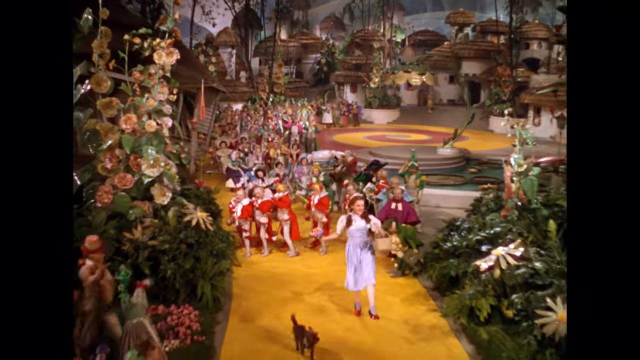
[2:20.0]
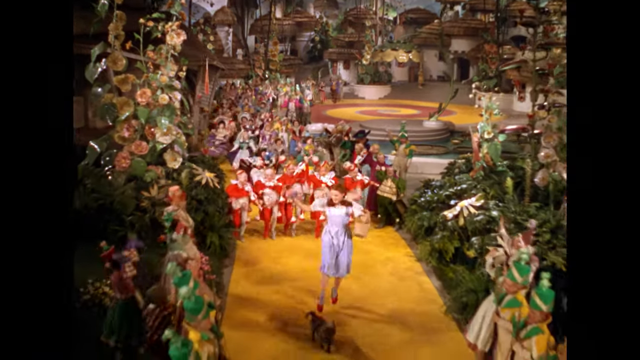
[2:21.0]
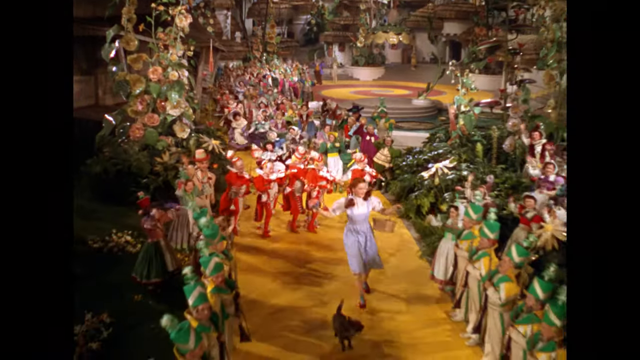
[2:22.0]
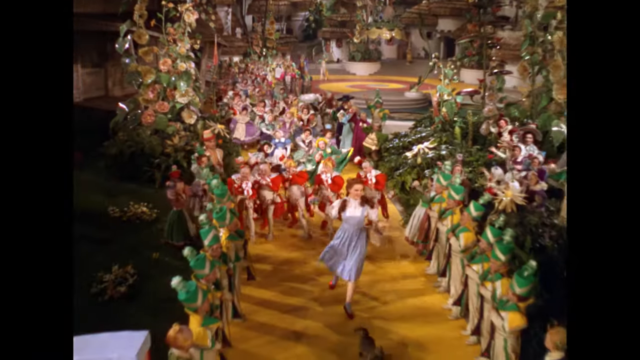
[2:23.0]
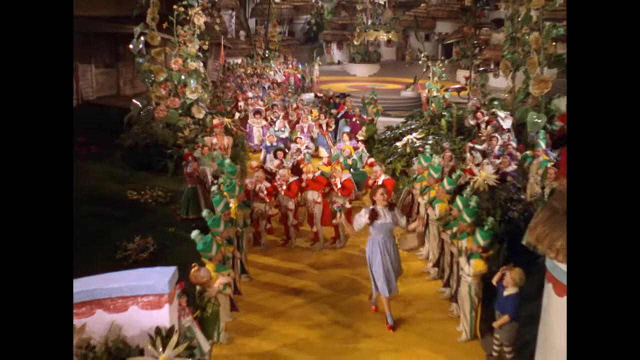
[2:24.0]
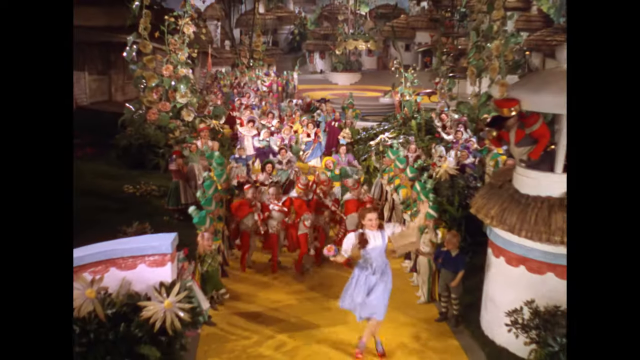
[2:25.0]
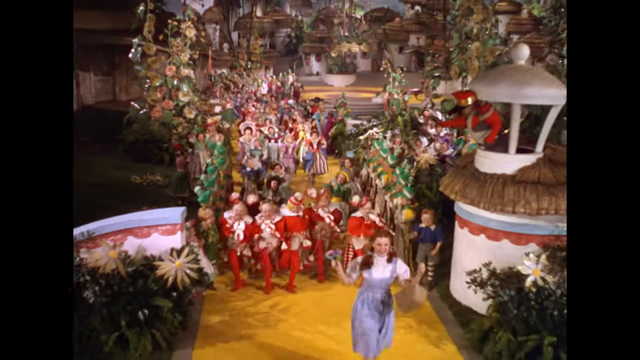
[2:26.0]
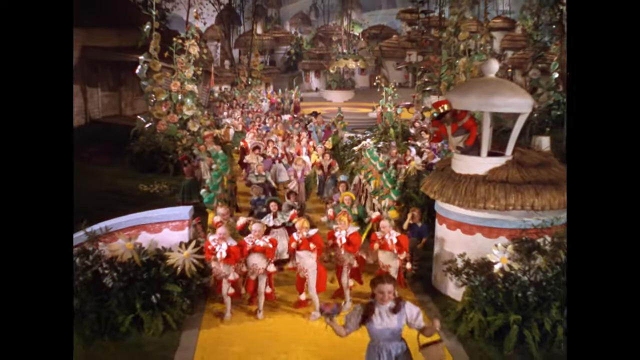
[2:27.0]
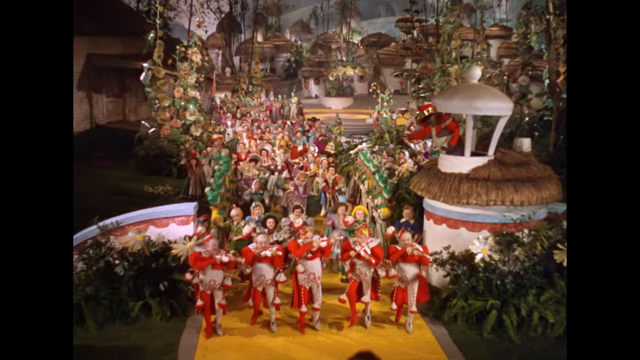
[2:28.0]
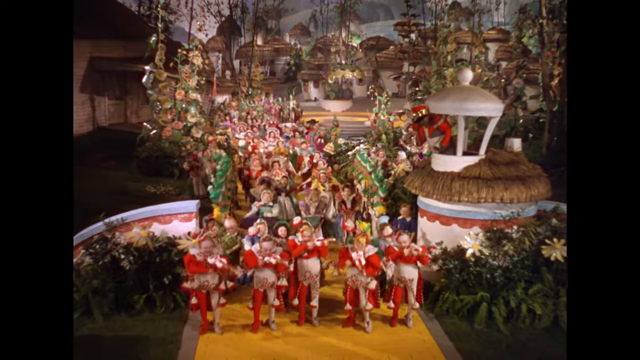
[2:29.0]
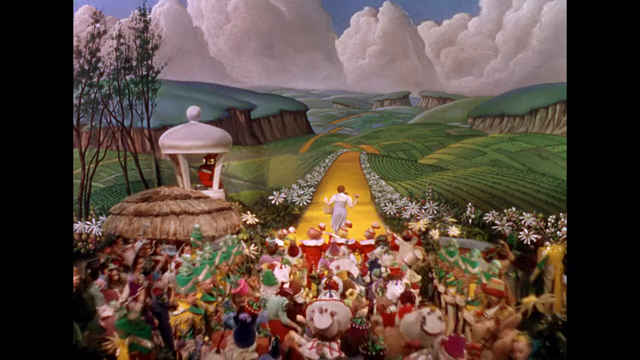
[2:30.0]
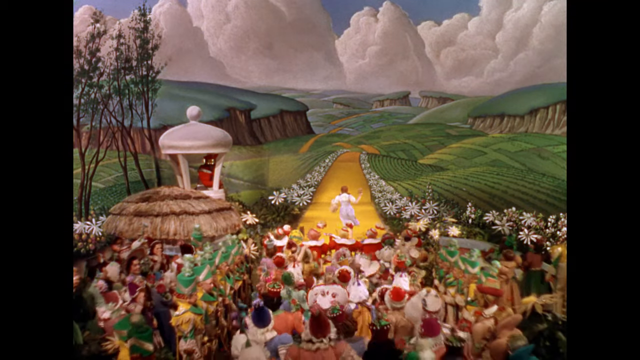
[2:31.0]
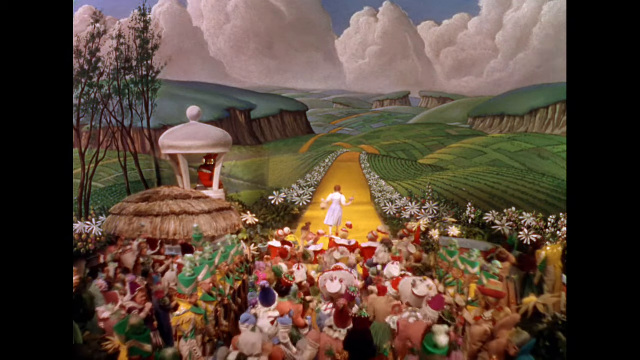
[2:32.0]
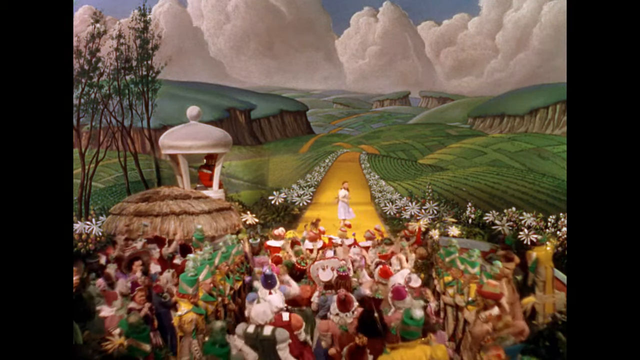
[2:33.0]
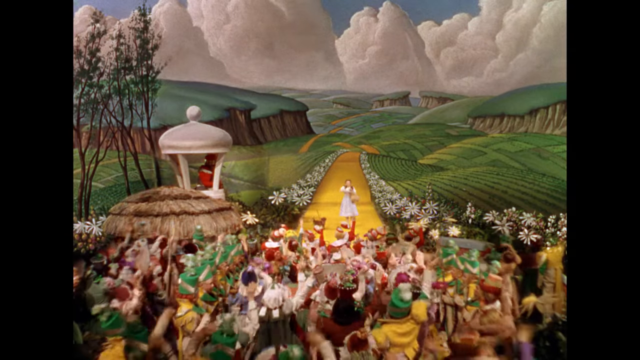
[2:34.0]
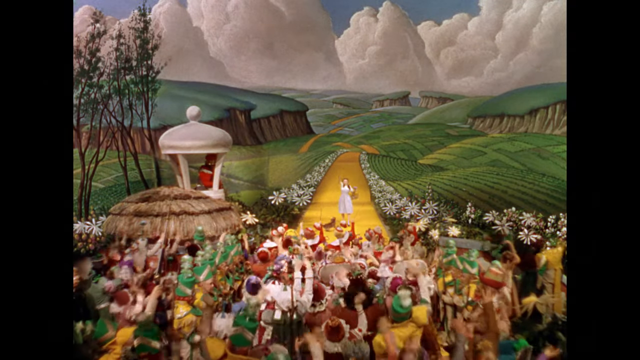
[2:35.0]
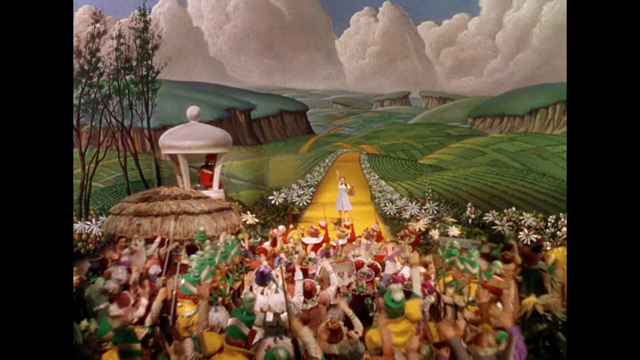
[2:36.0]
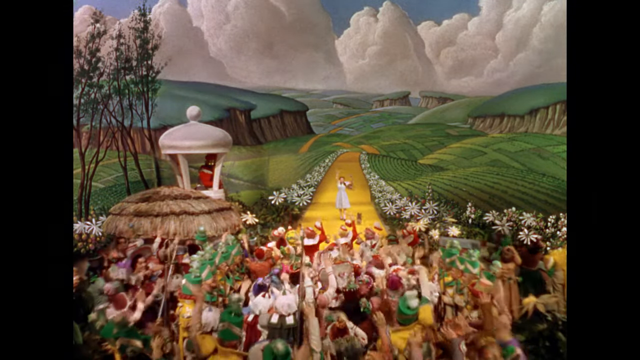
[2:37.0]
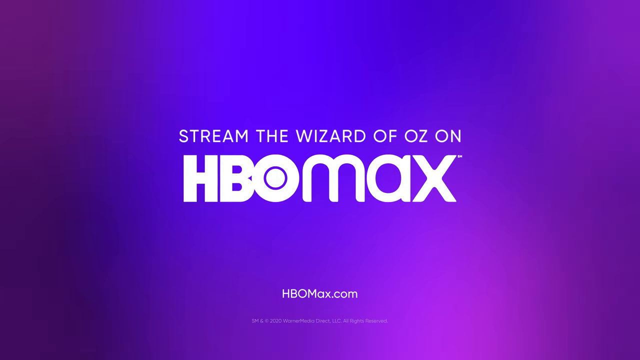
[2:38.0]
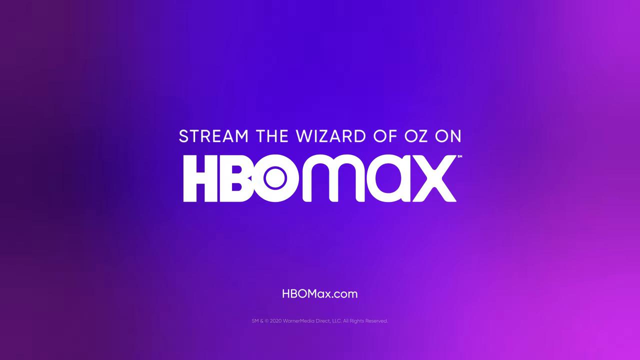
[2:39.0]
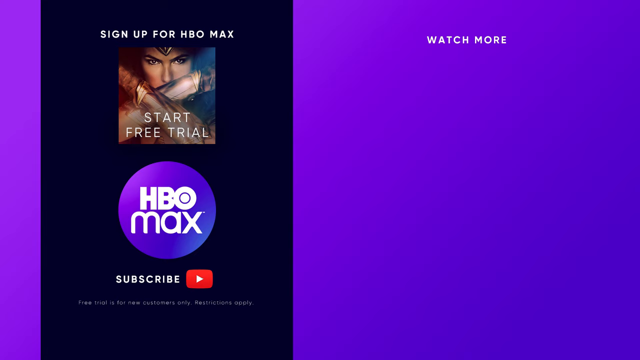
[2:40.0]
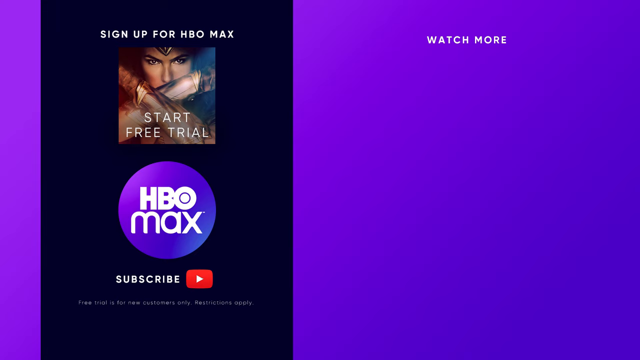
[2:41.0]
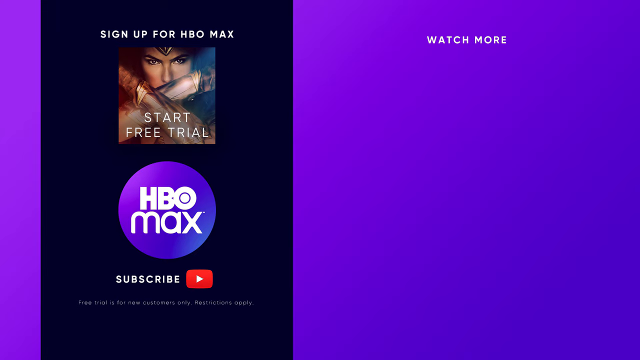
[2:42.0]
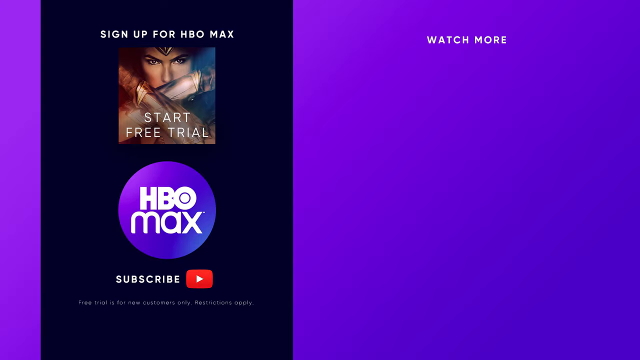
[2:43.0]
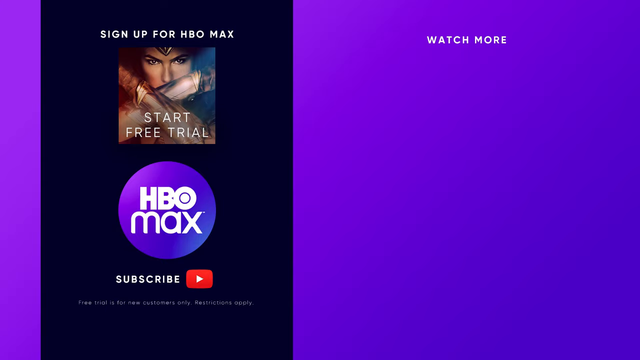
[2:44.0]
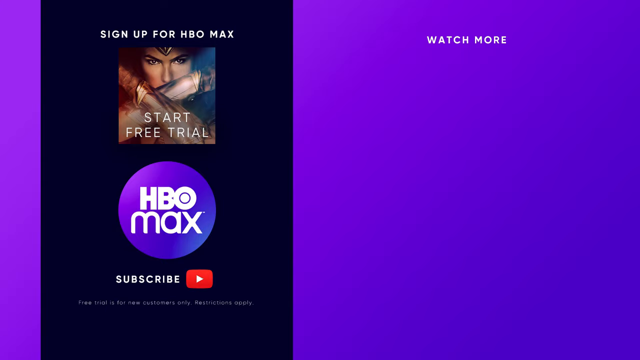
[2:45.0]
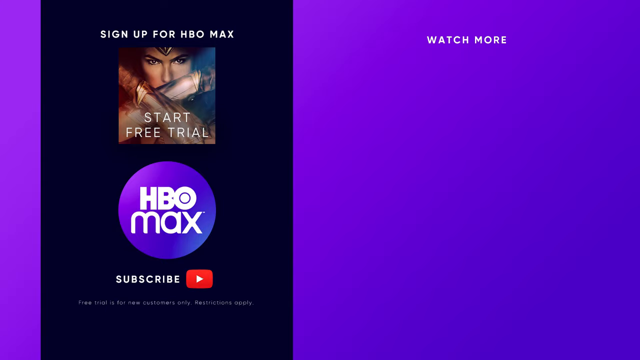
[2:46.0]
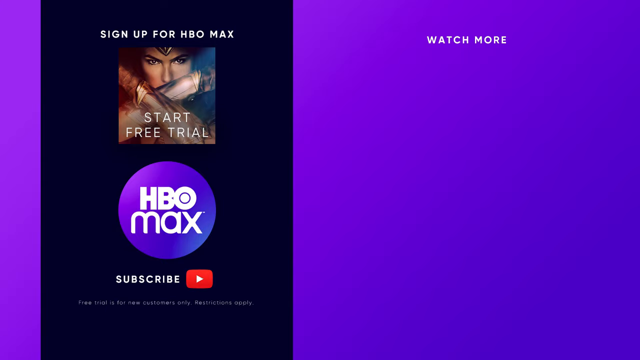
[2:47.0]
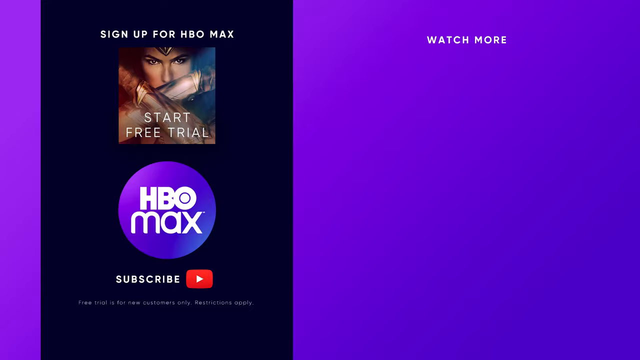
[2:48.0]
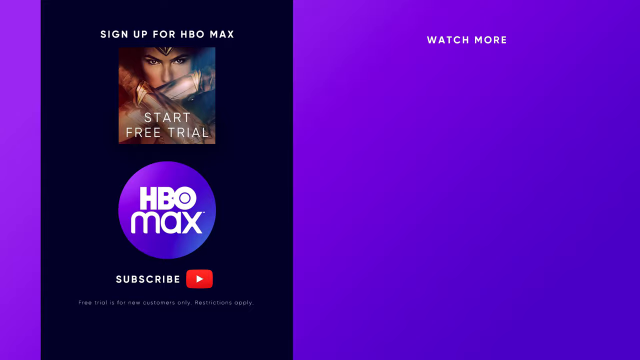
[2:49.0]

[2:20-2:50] In the scene from The Wizard of Oz, Dorothy skips down the yellow brick road in her blue and white checkered dress along with her black dog Toto. A large group of munchkins follows her along the path, and other munchkins line the road as she passes. A man in some type of watch tower, wearing a red top and a red hat, seems to wave her along. Dorothy keeps skipping down the yellow brick road while all the munchkins stop. The view changes so it looks as if it is from behind the crowd of munchkins, looking at Dorothy skipping down the yellow road that leads far into the distance. Dorothy stops, turns around and waves at the munchkins, who jump up and down and wave back. The screen changes to a purplish-bluish background with large white letters reading "Stream the Wizard of Oz on HBO Max" and "hbomax.com" at the bottom. Another screen follows: on the left, a dark blue panel runs from top to bottom on the purple background, reading "sign up for HBO Max". There is a picture of Wonder Woman with "start free trial" on it. Below that is a purple circle with "HBO Max" in white letters, and underneath it something like the YouTube play button, with "subscribe" in white letters to its left. At the very top of the right side, small white letters read "watch more".